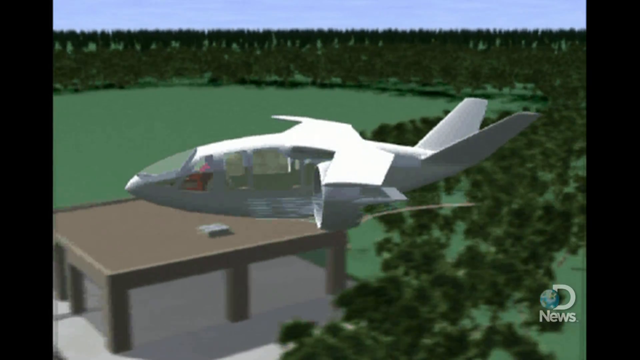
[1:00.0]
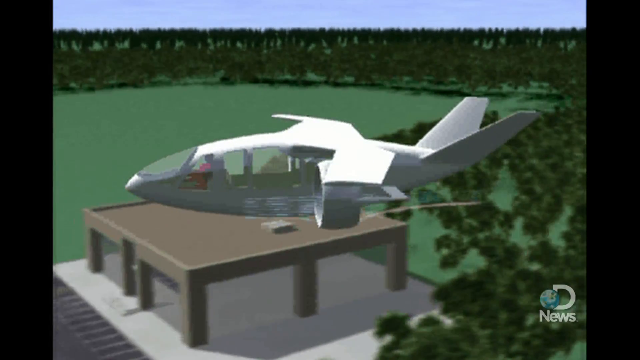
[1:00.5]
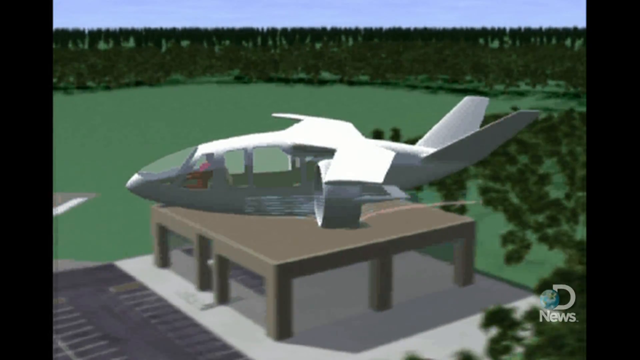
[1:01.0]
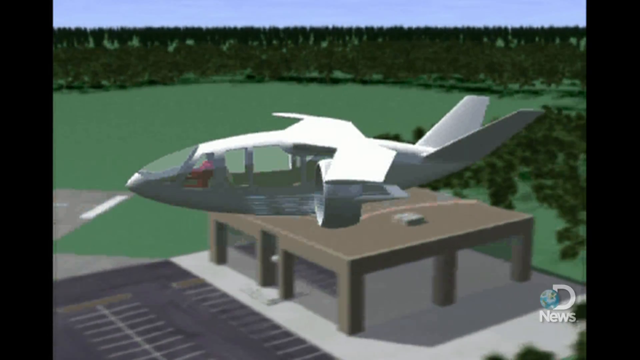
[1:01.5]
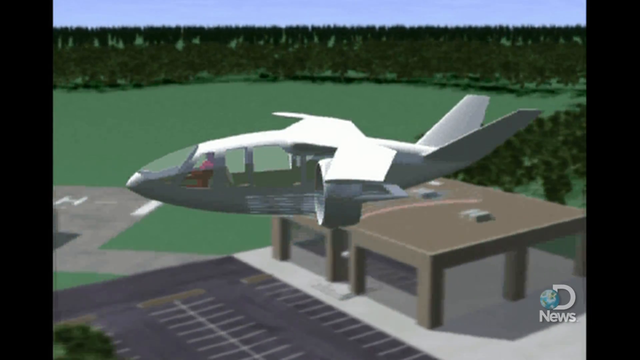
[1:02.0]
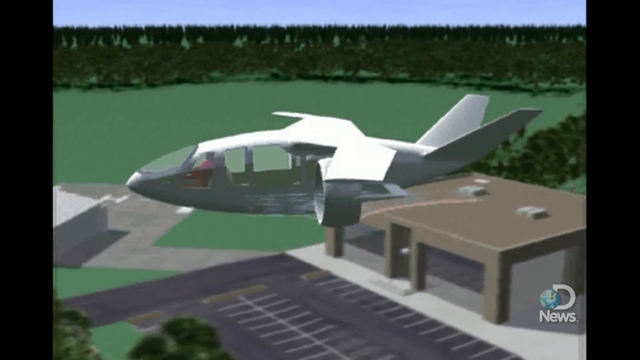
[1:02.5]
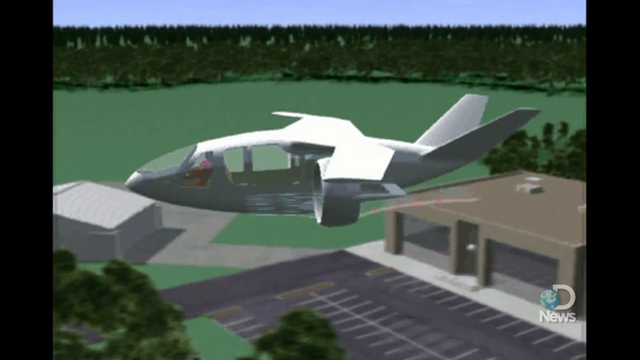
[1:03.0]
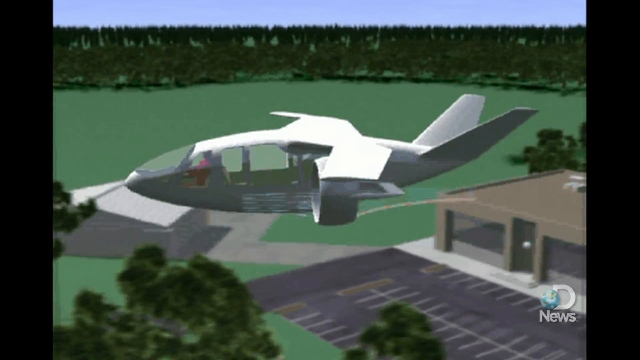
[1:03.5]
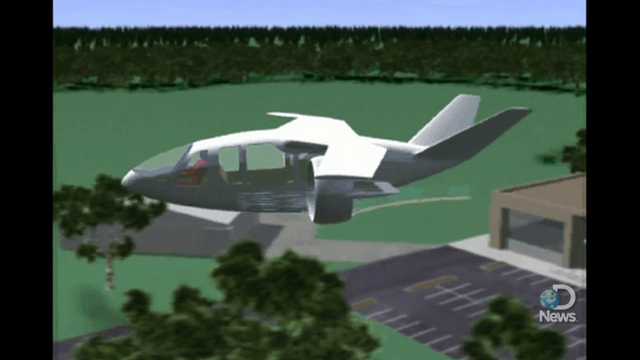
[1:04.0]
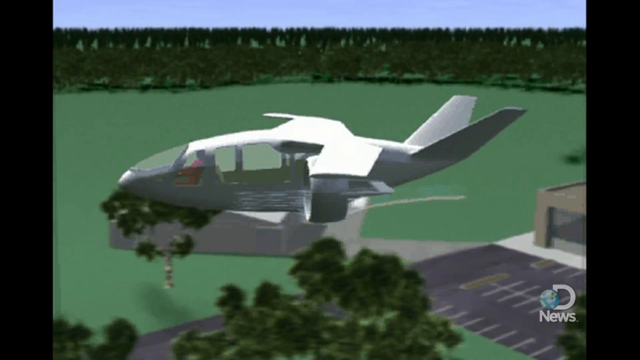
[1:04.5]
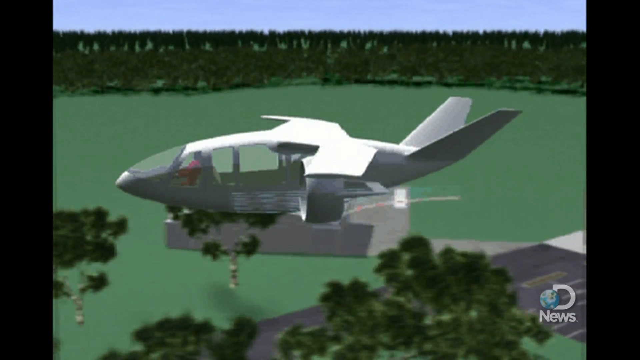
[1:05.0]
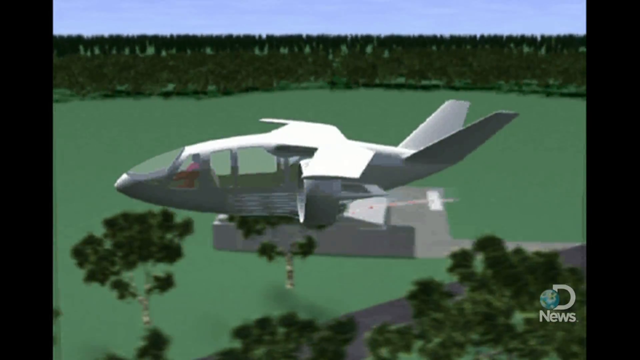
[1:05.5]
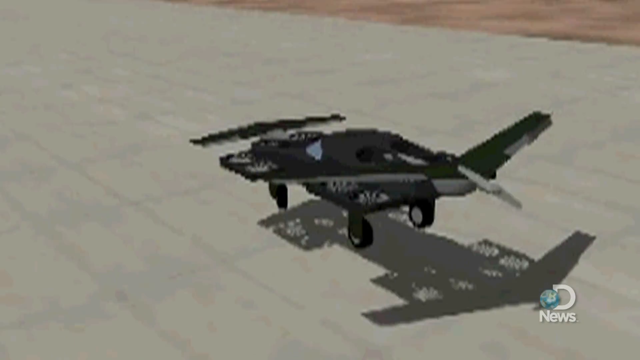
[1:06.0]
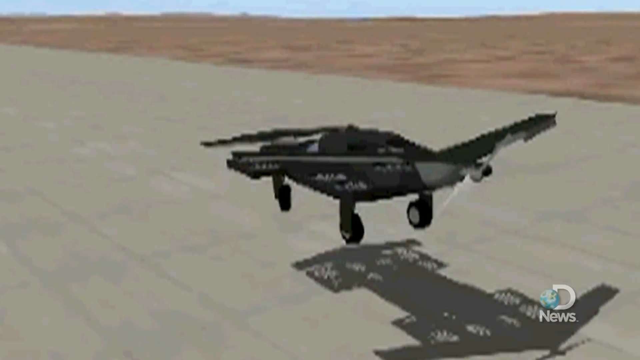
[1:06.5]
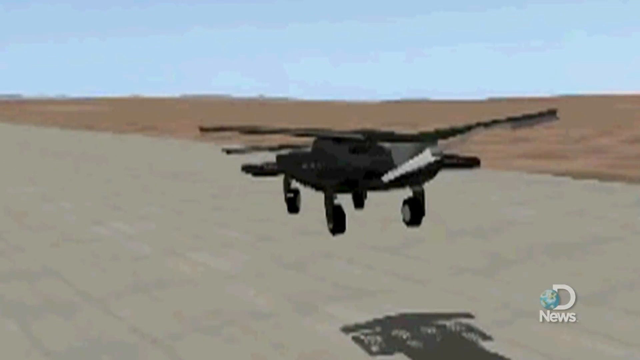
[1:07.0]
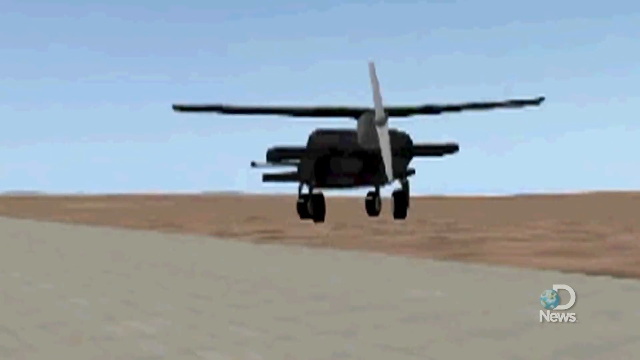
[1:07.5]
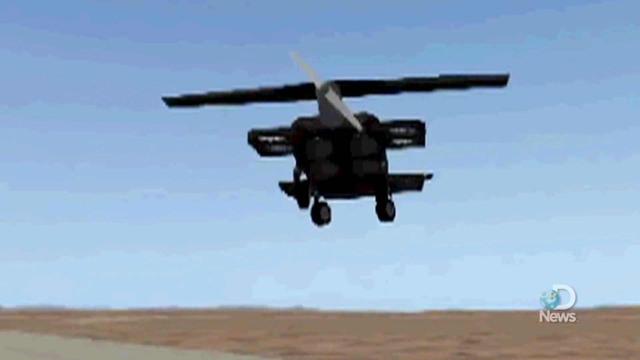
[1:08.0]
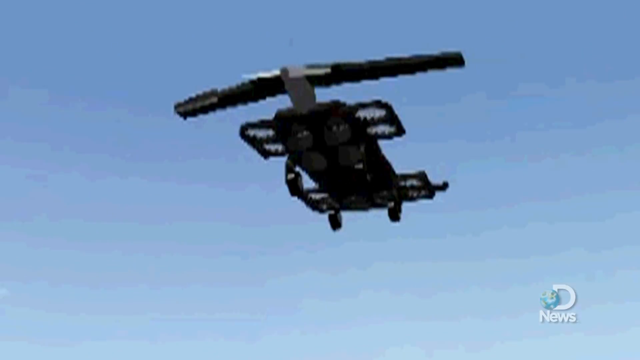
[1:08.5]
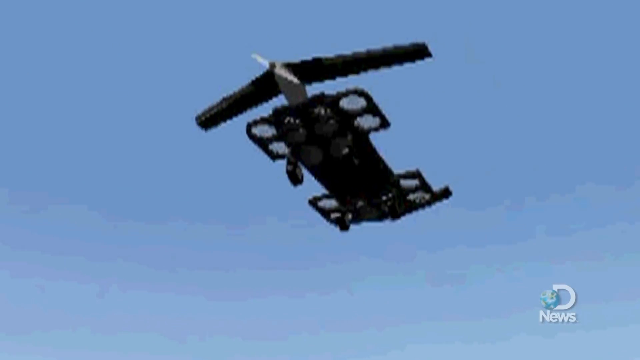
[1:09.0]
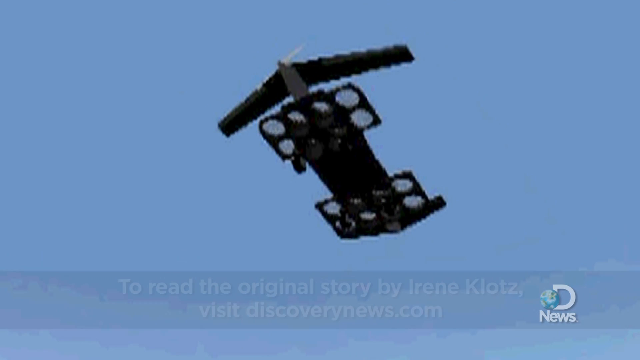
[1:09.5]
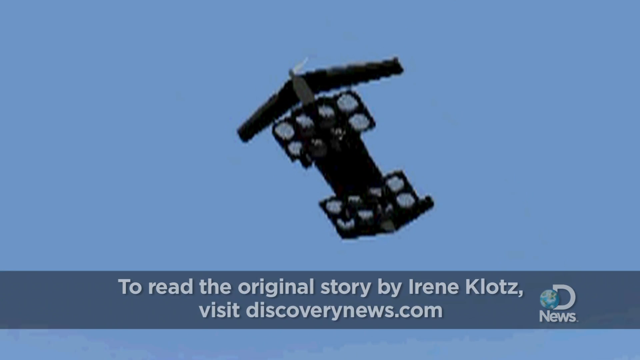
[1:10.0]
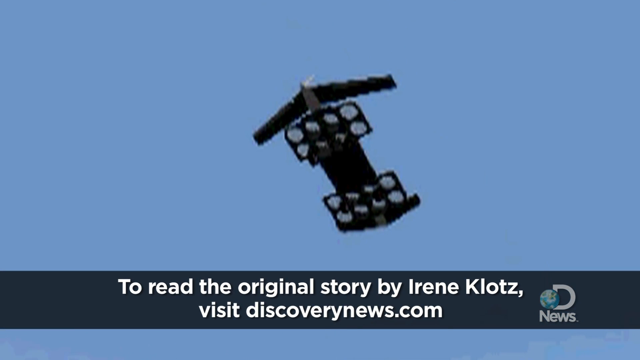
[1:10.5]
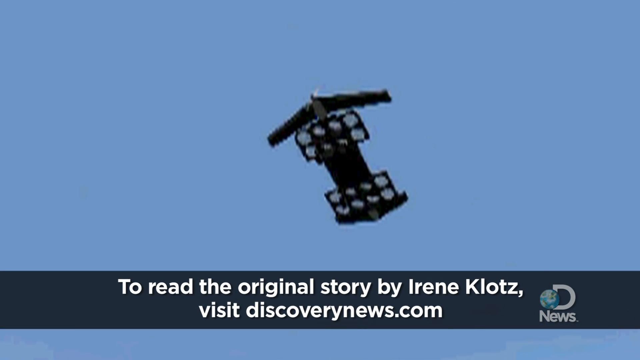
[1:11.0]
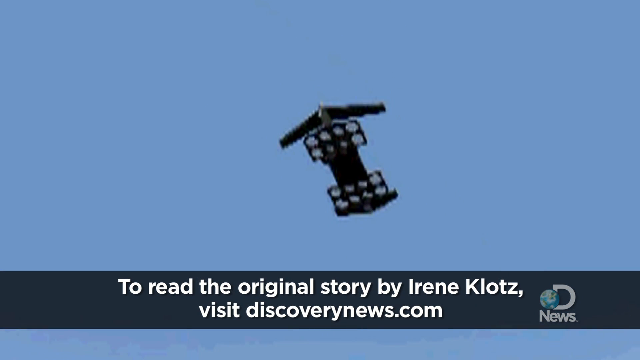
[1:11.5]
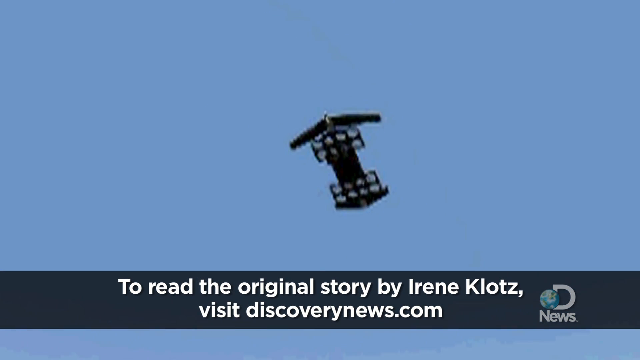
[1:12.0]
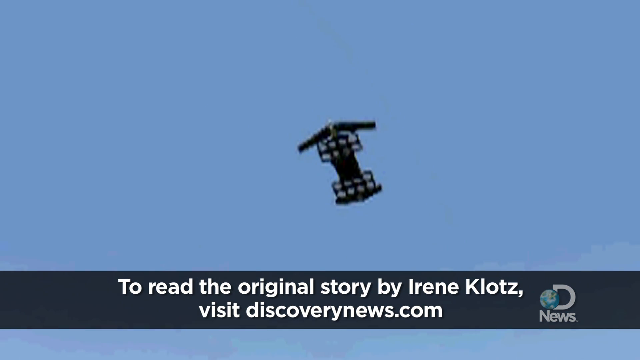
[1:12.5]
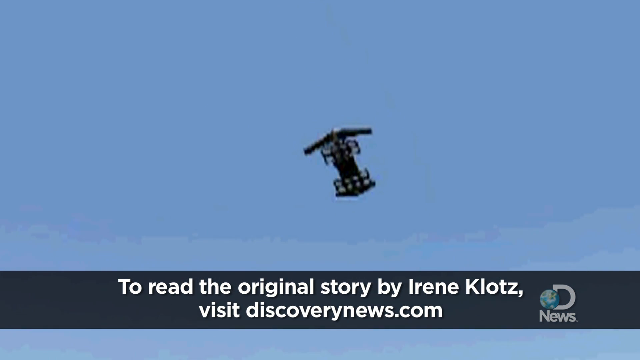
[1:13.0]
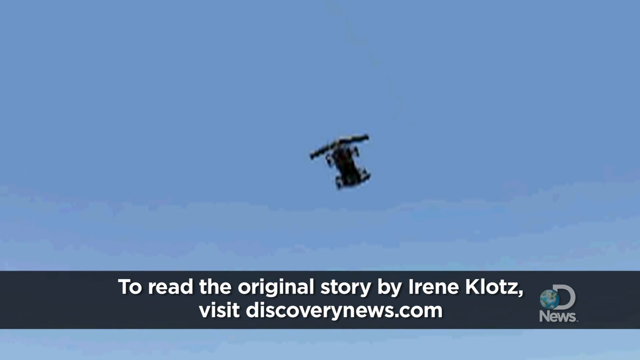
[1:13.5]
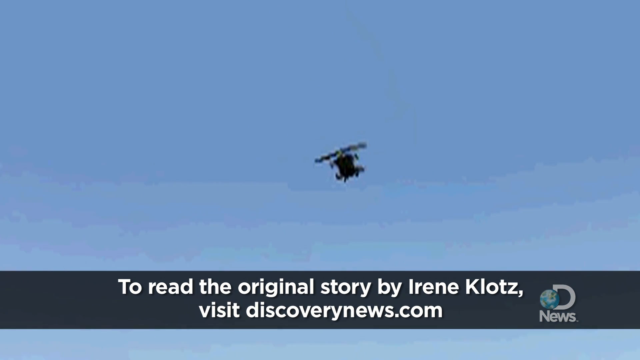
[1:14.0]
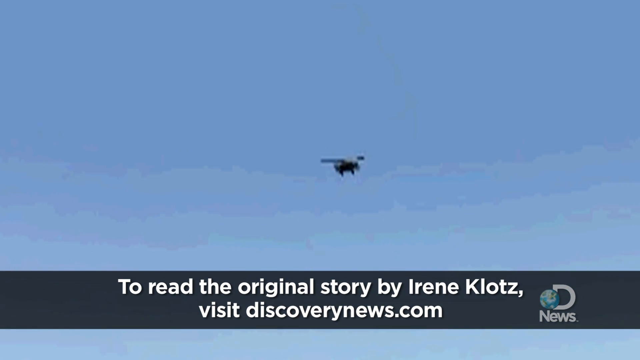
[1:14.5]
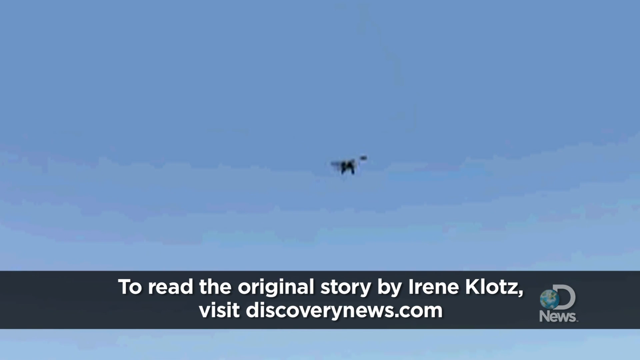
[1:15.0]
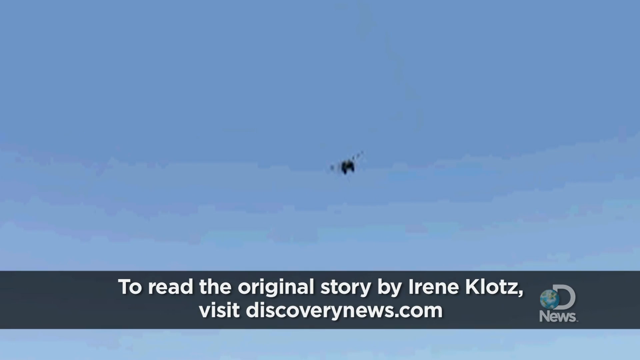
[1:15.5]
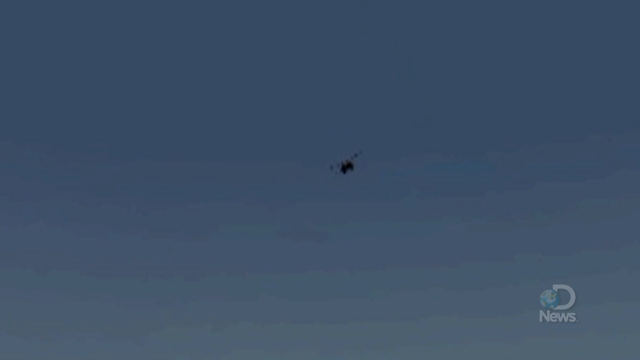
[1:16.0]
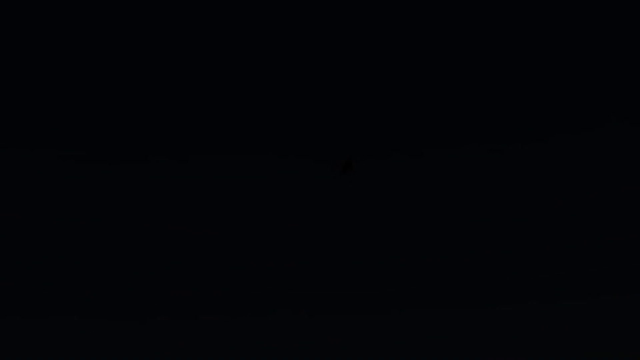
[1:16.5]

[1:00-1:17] Crude 3D animations show airplanes. A white airplane faces left; it appears to have a wing, two tail fins and an engine under the wing. It flies left, with a large window in the front and around three or four on the sides, which look very large. Green trees and a building pass below it, with more green trees and a field in the background. The video transitions to another very crude airplane that appears to have many upward-facing rotors, four in the front and four in the back, two on each side. It also seems to have a propeller at the back, a wing, a large tail and four wheels. It takes off vertically and the camera follows it upward, looking at its underside, where it shows 16 rotors, eight in the back and eight in the front. At the bottom, white text in a black banner reads "to read the original story by Irene Klotz, please visit discoverynews.com." The aerial vehicle lifts vertically and flies away from the viewer, and the video fades out to black.